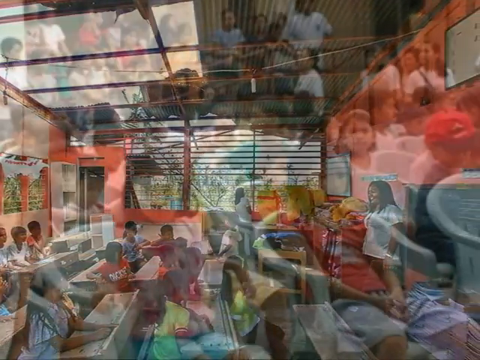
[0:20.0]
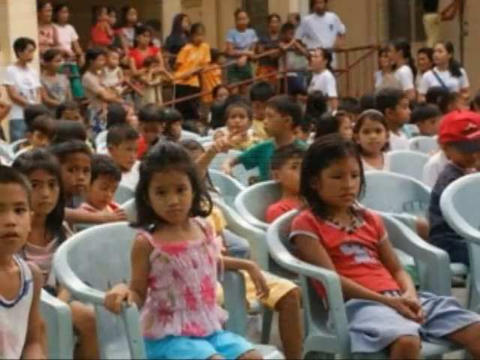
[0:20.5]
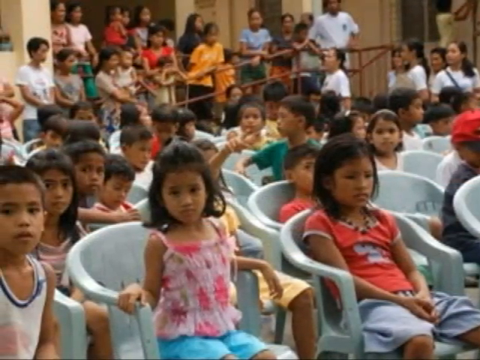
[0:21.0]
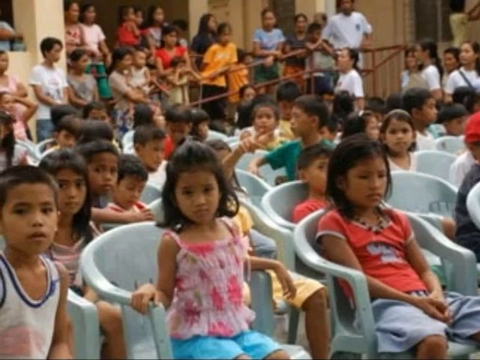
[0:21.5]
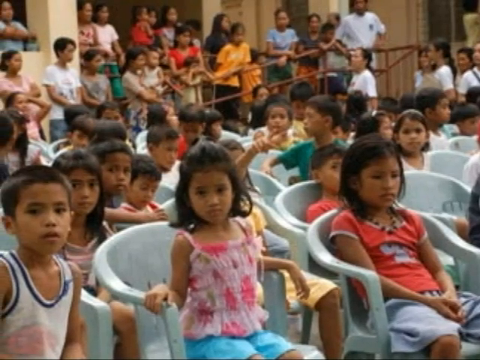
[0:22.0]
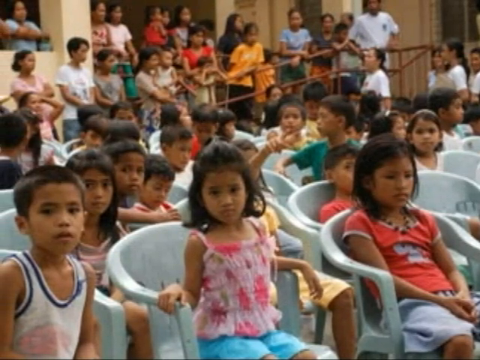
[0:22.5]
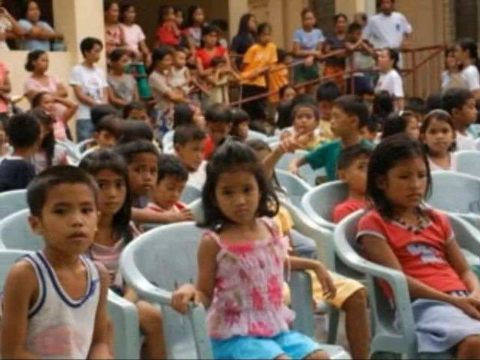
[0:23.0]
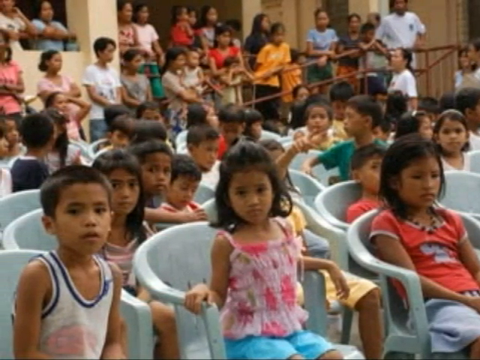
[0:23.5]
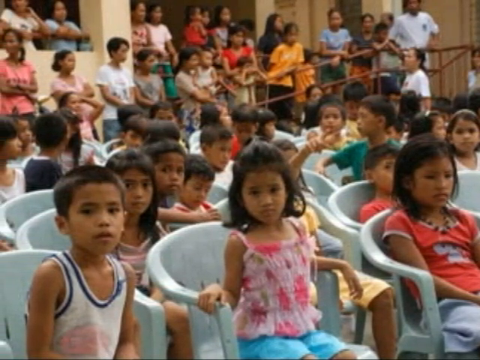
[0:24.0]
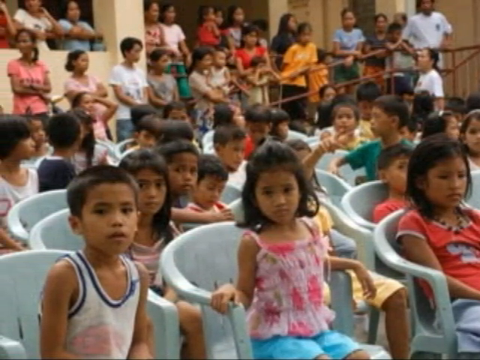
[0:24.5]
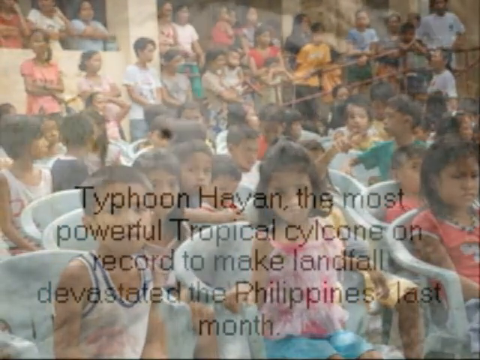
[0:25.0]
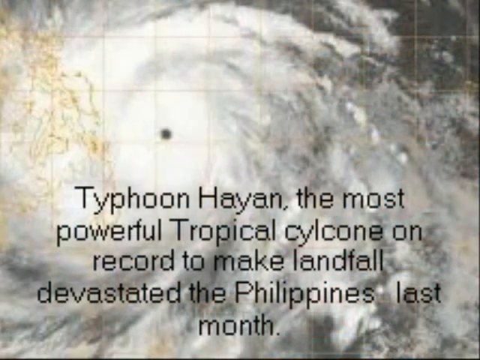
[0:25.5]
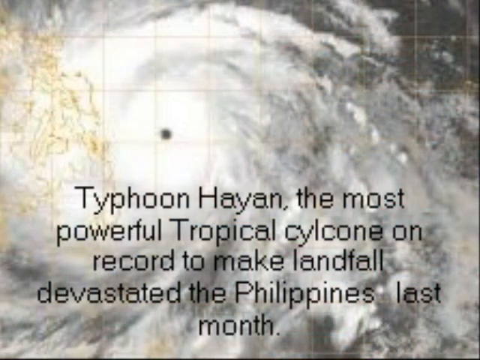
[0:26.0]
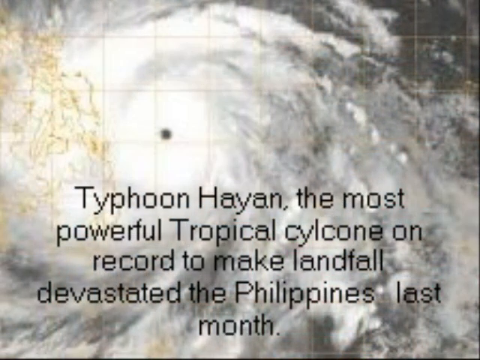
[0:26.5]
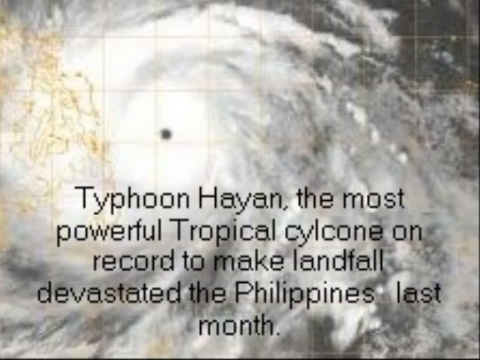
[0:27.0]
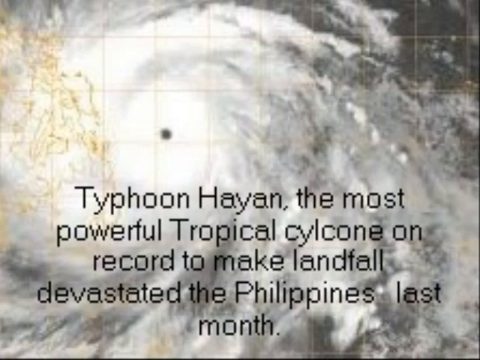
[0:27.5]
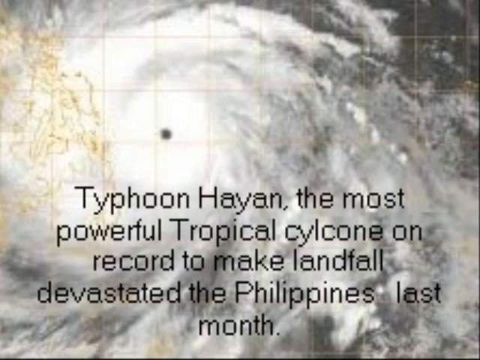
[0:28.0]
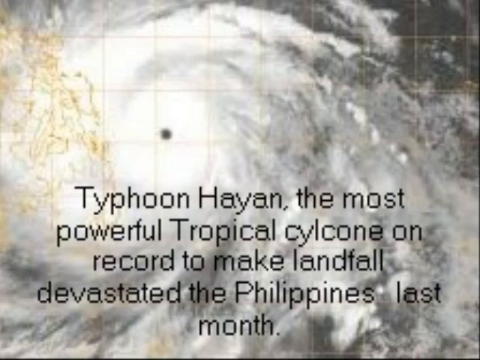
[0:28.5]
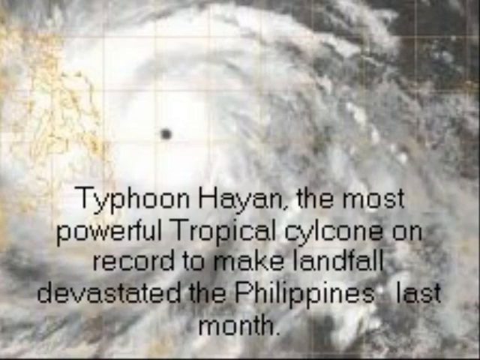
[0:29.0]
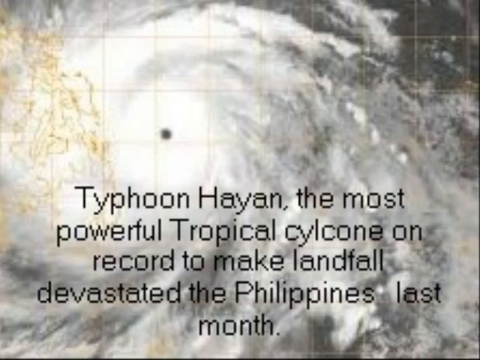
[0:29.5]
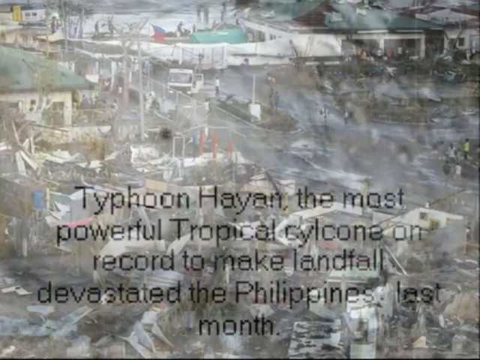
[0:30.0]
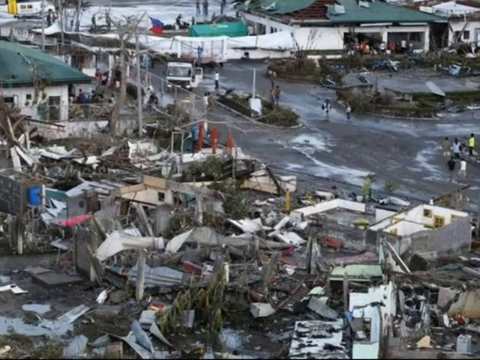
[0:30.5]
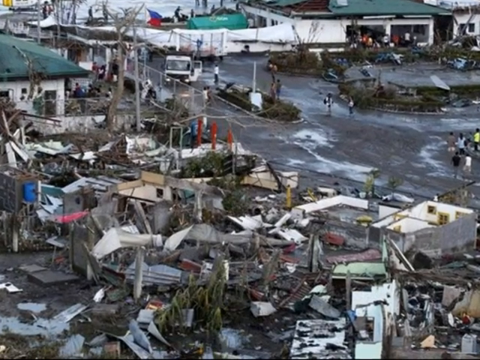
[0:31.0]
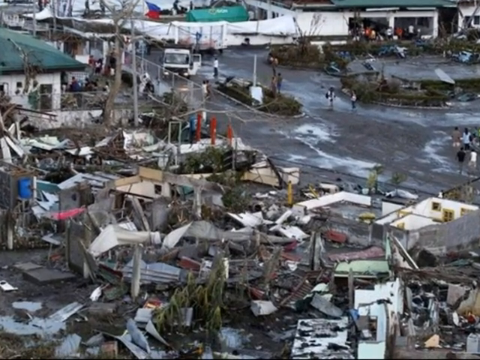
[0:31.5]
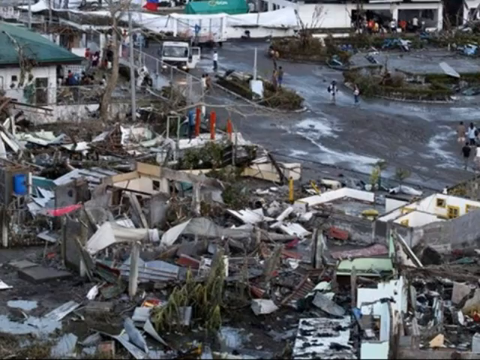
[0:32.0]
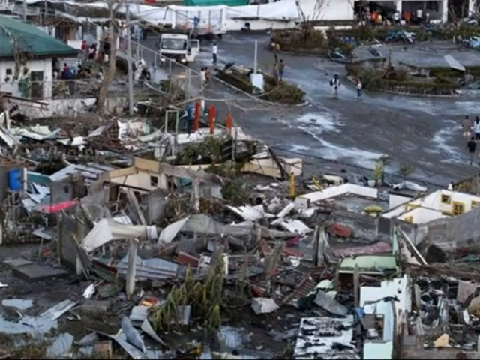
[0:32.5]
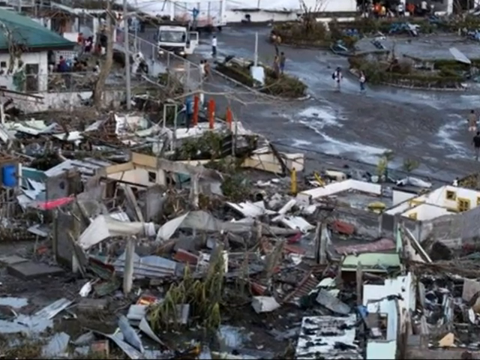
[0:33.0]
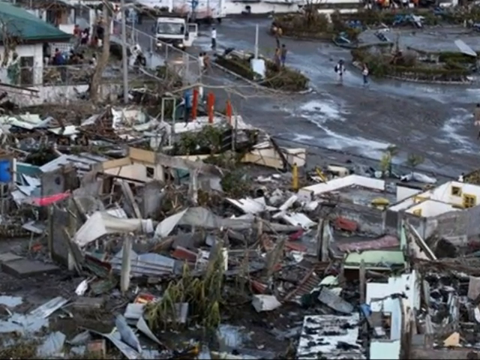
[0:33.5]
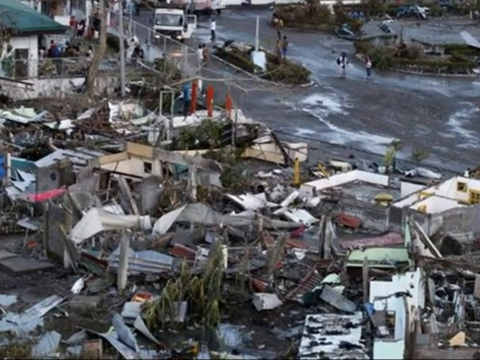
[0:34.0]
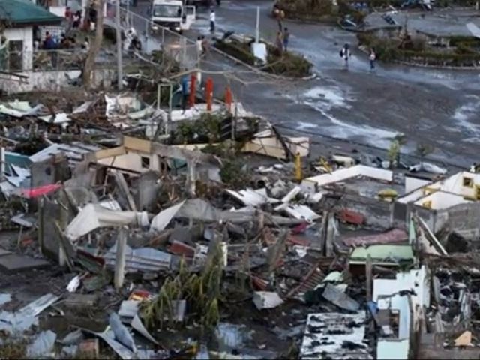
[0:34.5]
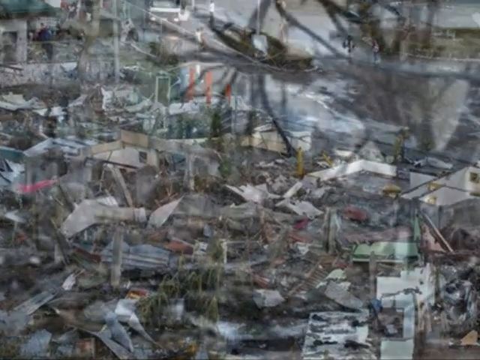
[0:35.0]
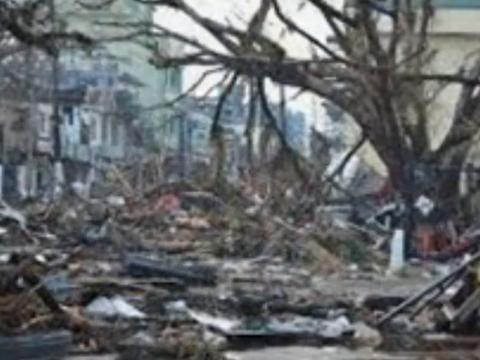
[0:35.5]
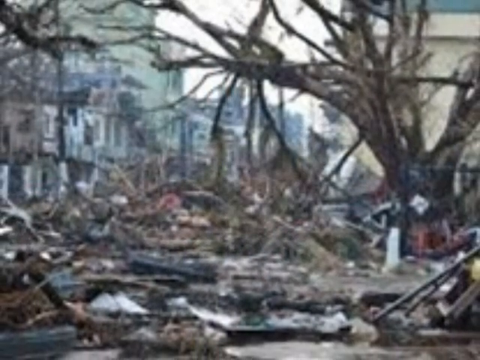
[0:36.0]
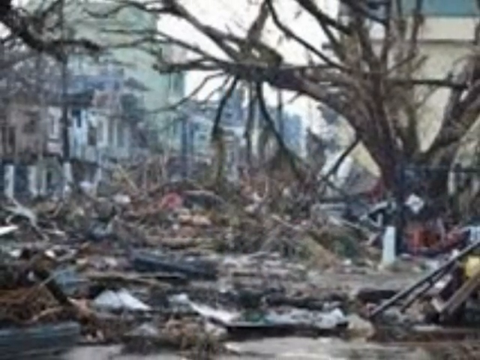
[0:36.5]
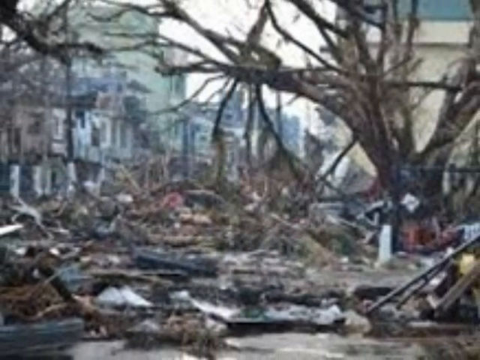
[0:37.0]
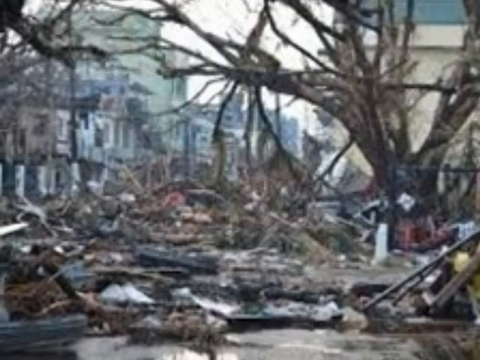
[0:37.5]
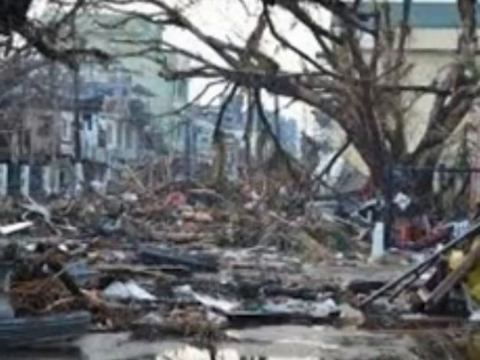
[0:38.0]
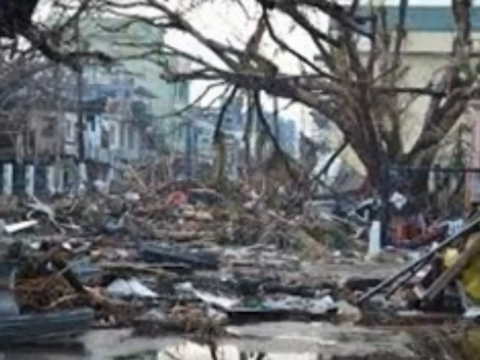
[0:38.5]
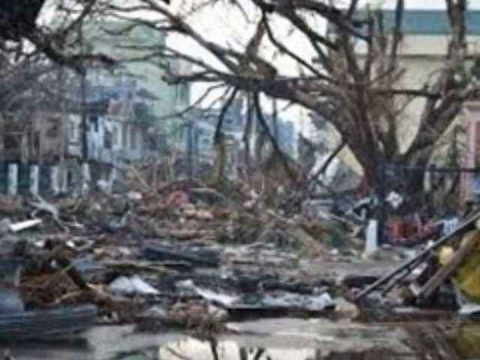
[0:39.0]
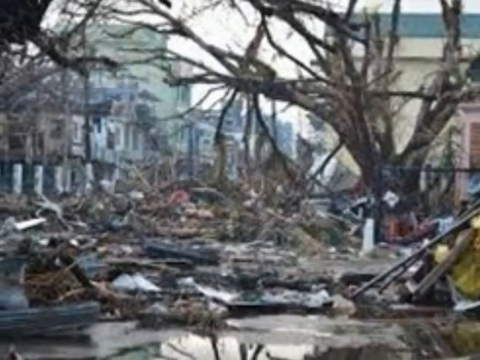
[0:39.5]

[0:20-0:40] Dozens of children are inside an auditorium of a building, seated in plastic chairs. The video then transitions to a weather satellite image with the words "Typhoon Haiyan, the most powerful tropical cyclone on record to make landfall devastated the building last month." The satellite image shows a tropical storm with a large vortex and an eye hitting the Philippines. Next comes the aftermath of the storm: an outdoor setting with dozens of people moving around while buildings and materials, including sheet metal and plastic, are strewn about the surface. Many of the buildings have no siding and their roofs are completely destroyed, and there is water on the ground around them. The video then transitions to more devastation, with destroyed trees with broken limbs in the background.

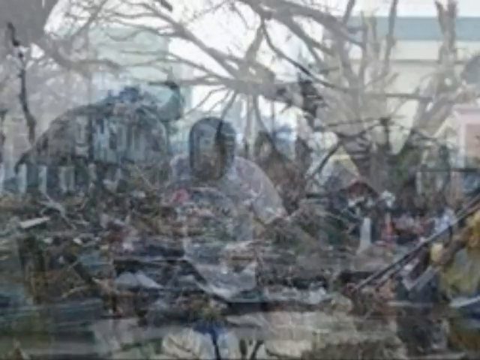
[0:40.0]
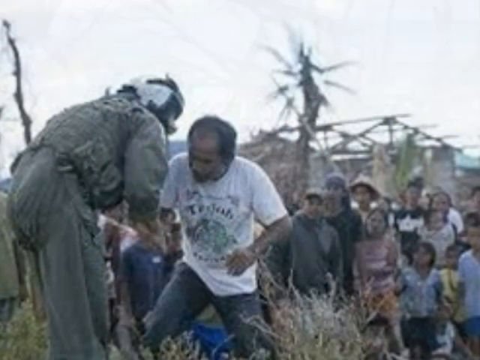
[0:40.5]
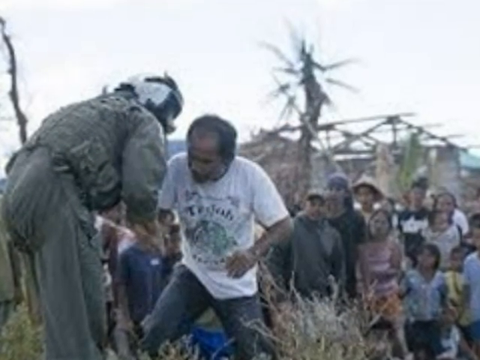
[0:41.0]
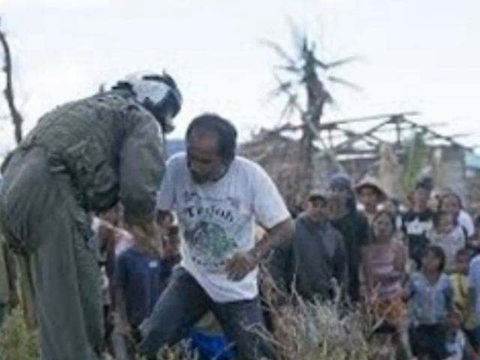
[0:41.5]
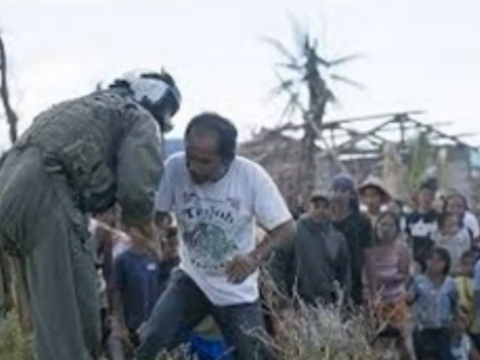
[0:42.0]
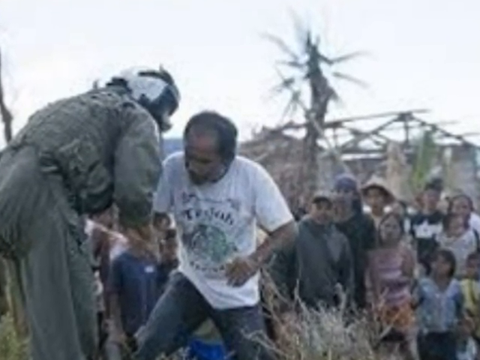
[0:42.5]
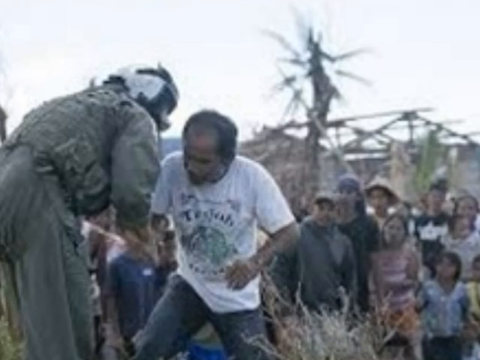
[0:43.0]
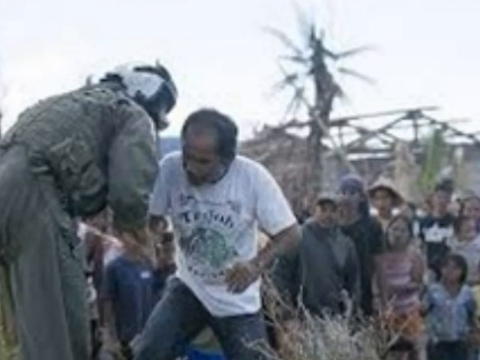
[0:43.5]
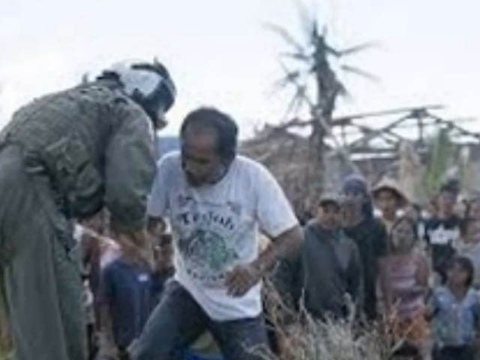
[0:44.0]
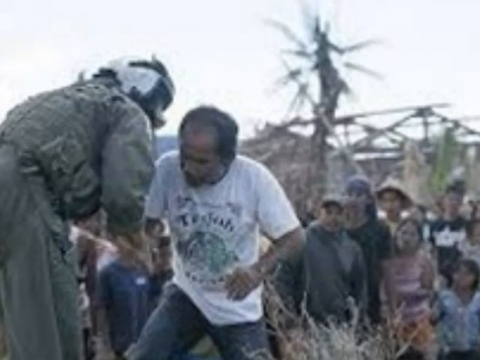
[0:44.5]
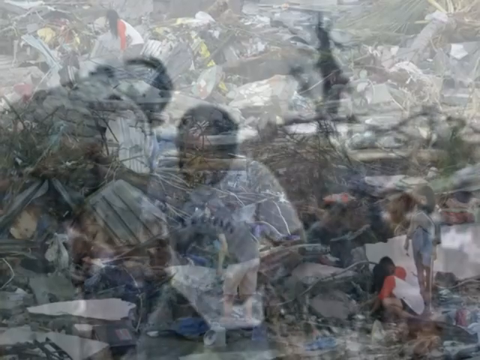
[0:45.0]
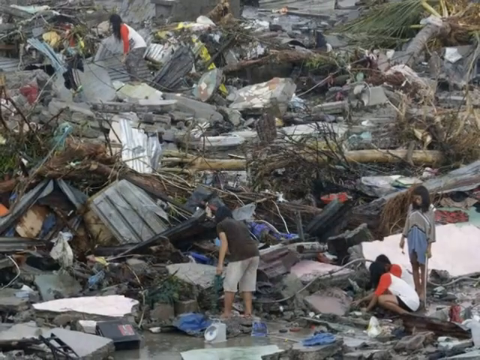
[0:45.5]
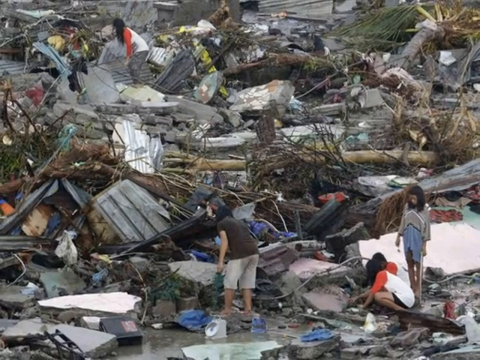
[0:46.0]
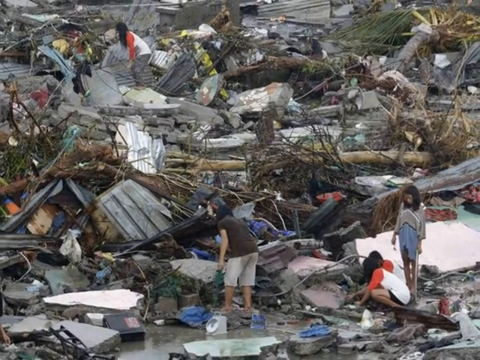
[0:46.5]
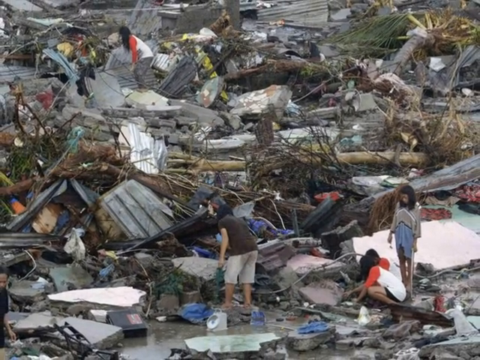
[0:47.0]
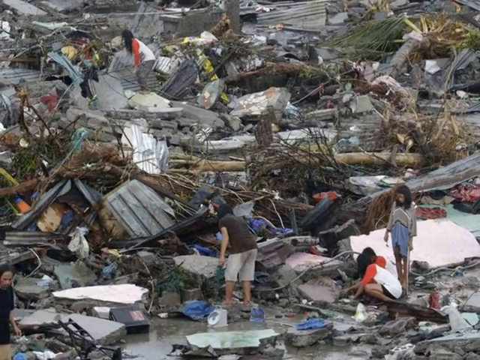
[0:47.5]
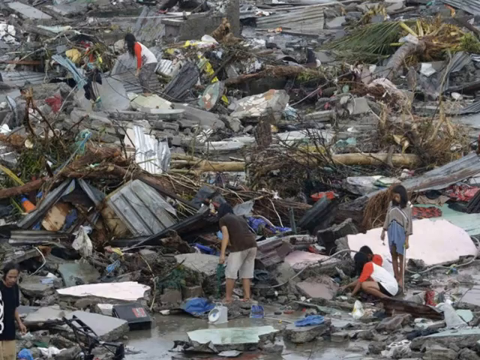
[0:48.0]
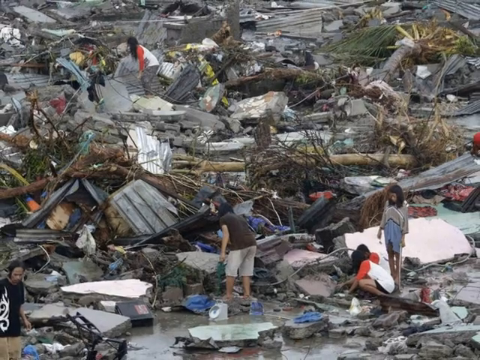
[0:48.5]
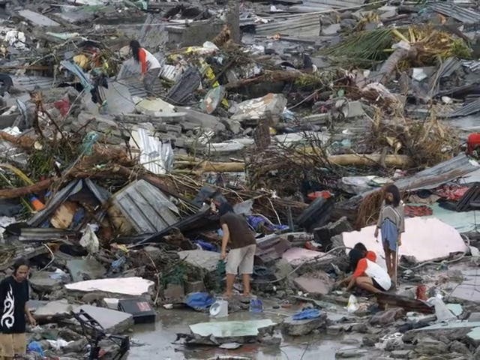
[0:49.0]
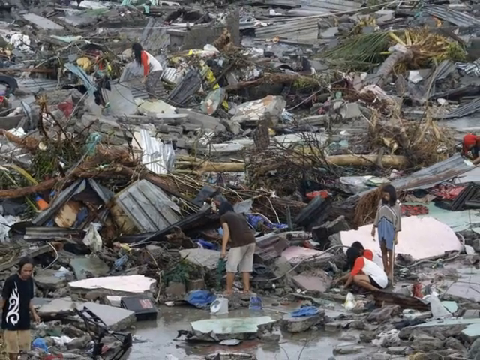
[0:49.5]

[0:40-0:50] Several people are standing around with destruction in the background, including a damaged building and a damaged tree. A different shot then shows the large extent of damage to buildings and structures, including collapsed roofs and siding, twisted metal and tree branches. People rummage around the destruction, trying to pull items and objects from the rubble, which is very large and expands across the entire screen. Broken concrete and wires protrude from several of the piles. A total of five people are visible, two on top of the rubble and three at the bottom of the pile.